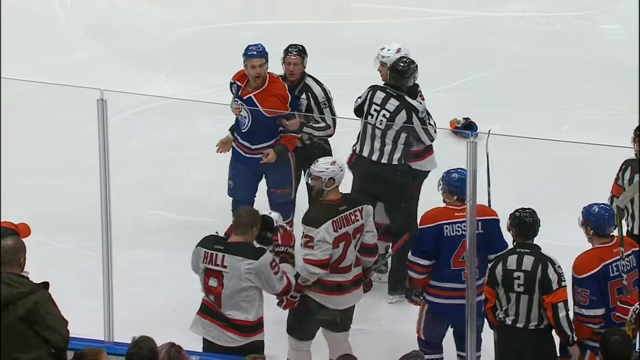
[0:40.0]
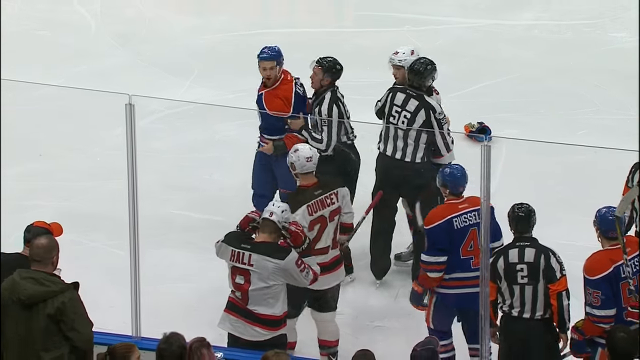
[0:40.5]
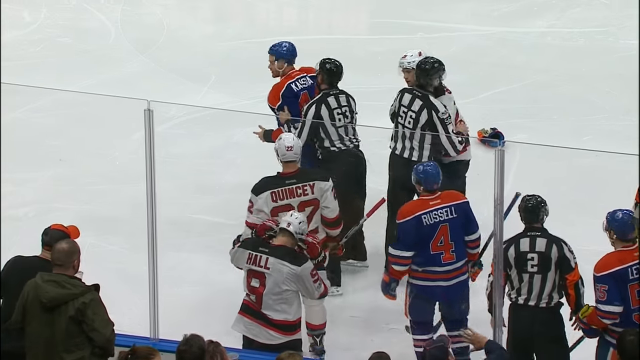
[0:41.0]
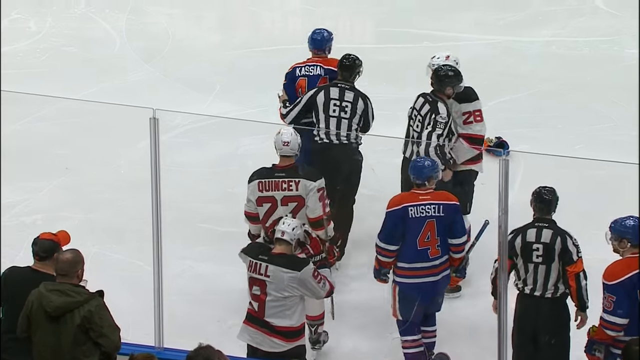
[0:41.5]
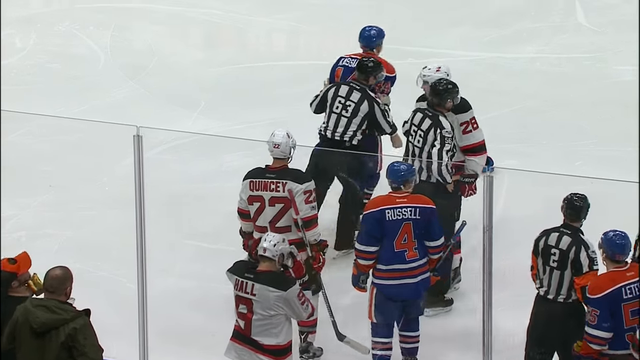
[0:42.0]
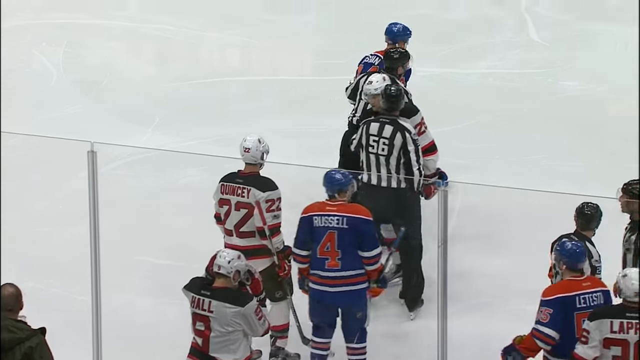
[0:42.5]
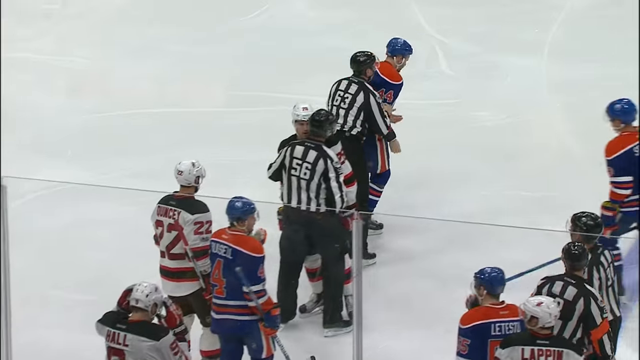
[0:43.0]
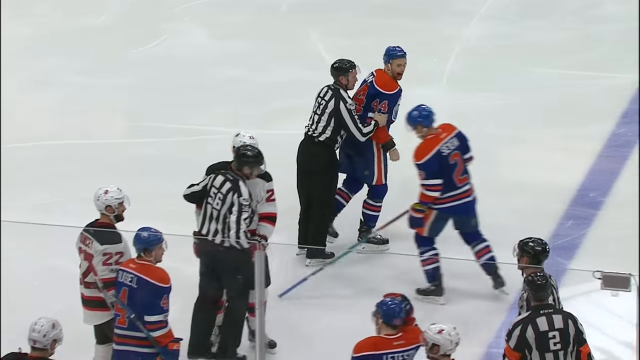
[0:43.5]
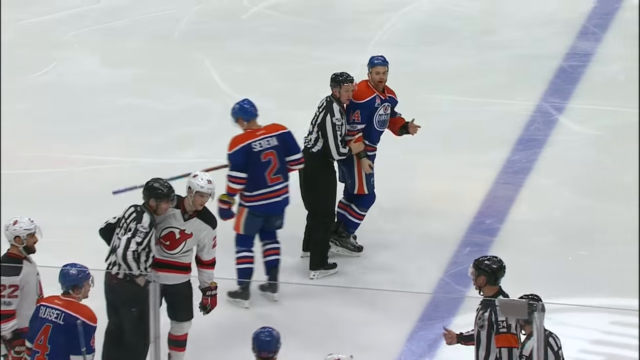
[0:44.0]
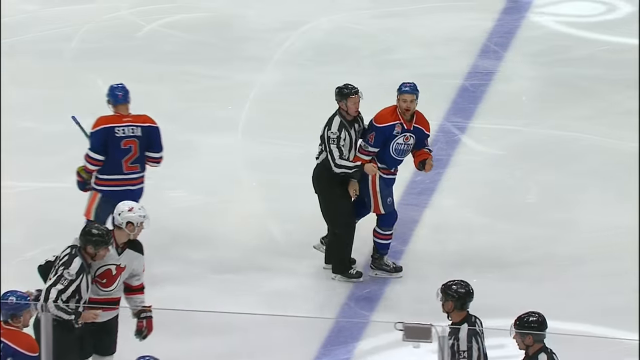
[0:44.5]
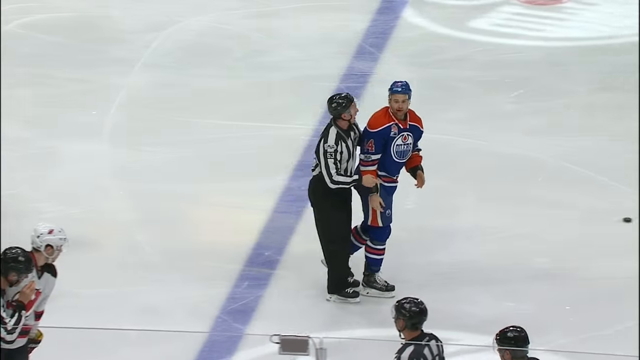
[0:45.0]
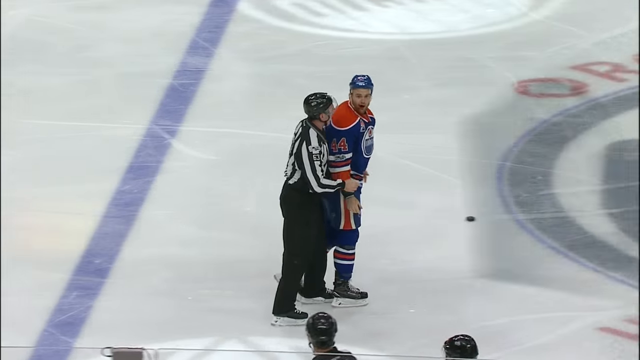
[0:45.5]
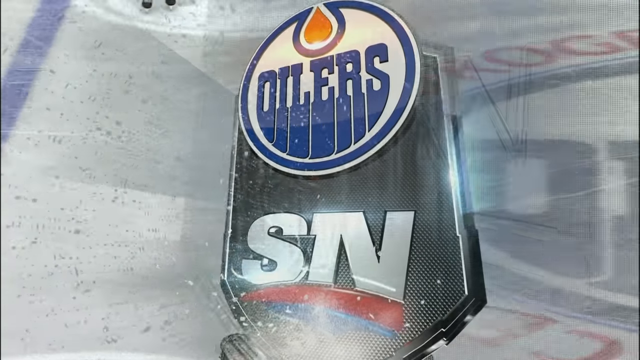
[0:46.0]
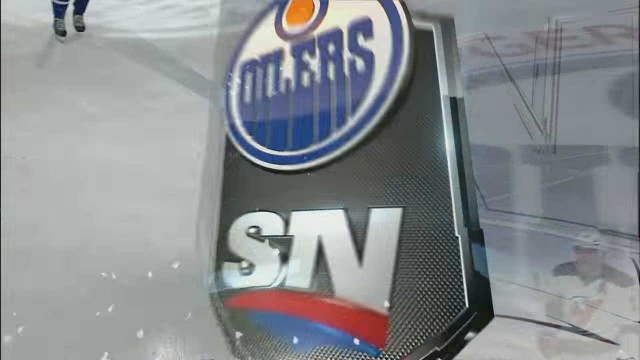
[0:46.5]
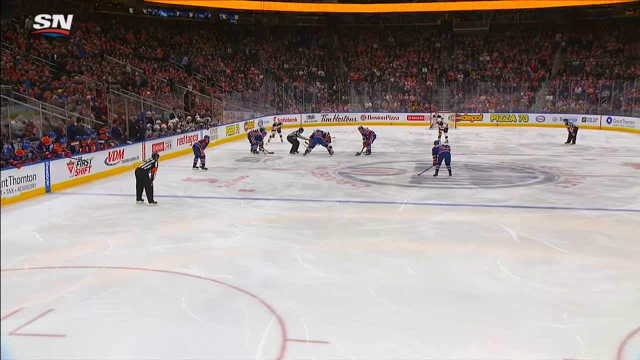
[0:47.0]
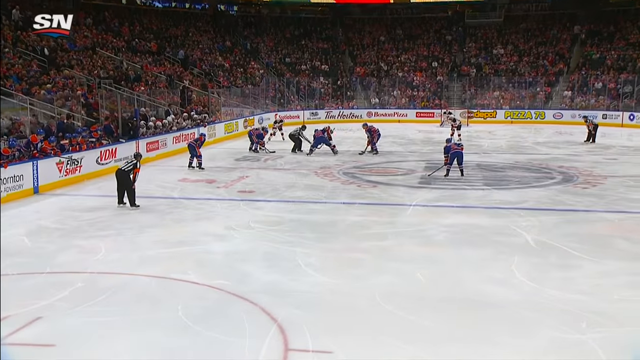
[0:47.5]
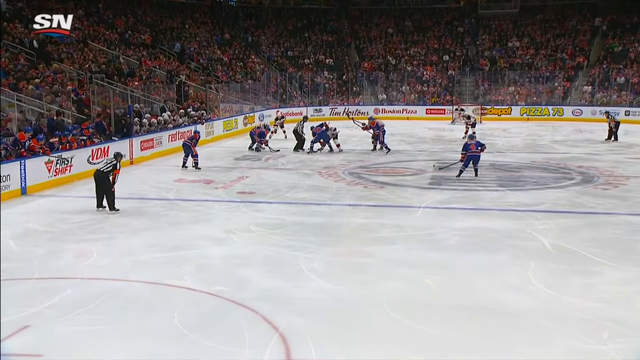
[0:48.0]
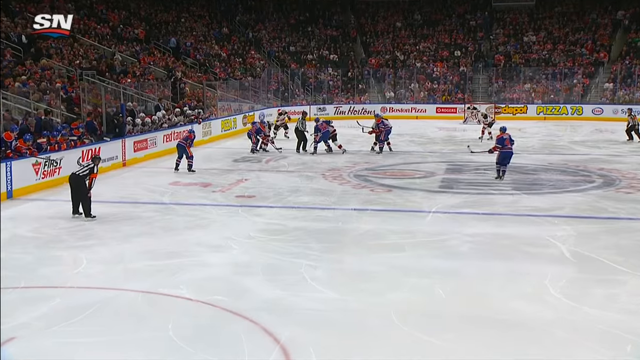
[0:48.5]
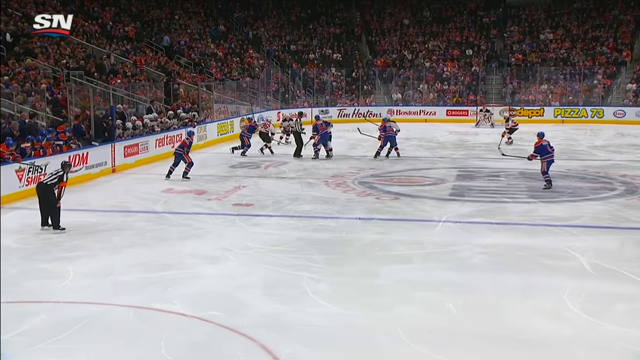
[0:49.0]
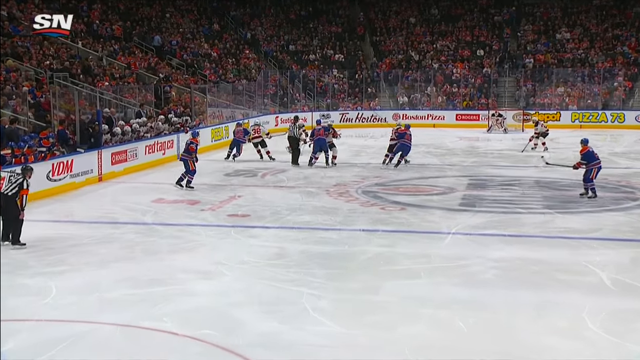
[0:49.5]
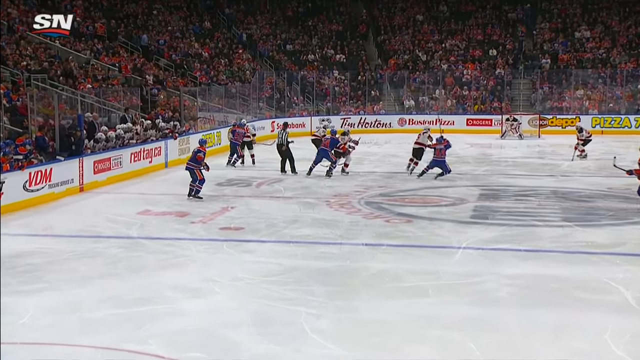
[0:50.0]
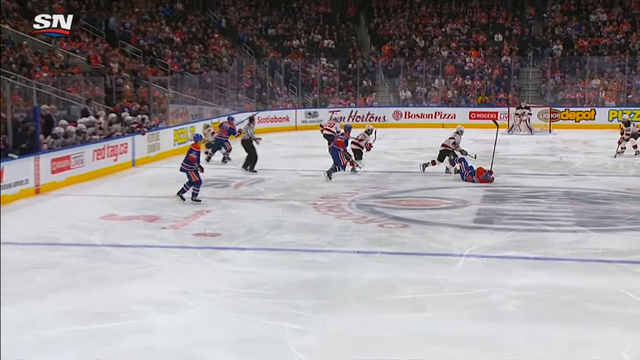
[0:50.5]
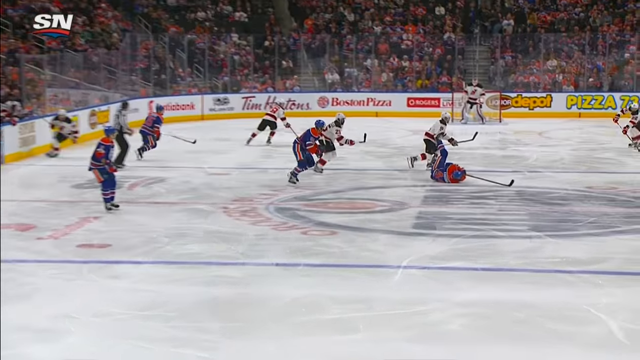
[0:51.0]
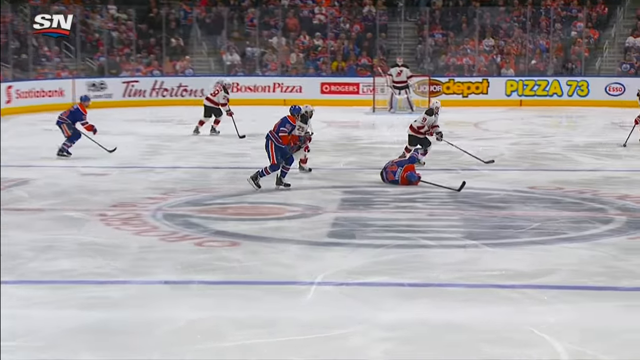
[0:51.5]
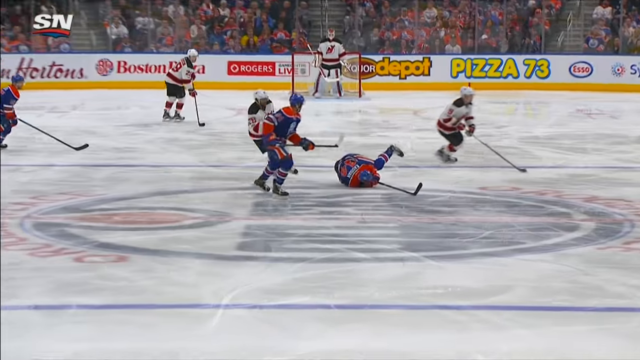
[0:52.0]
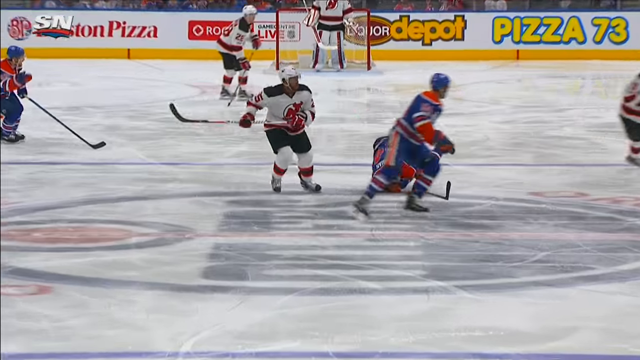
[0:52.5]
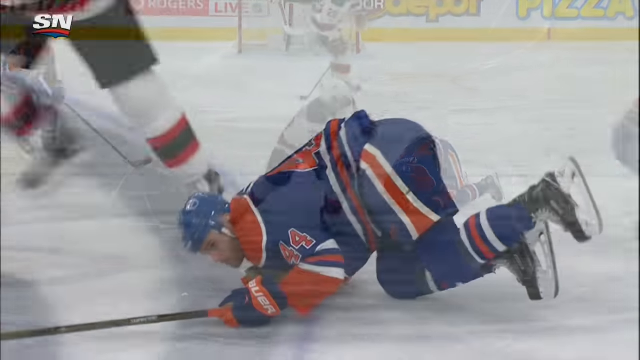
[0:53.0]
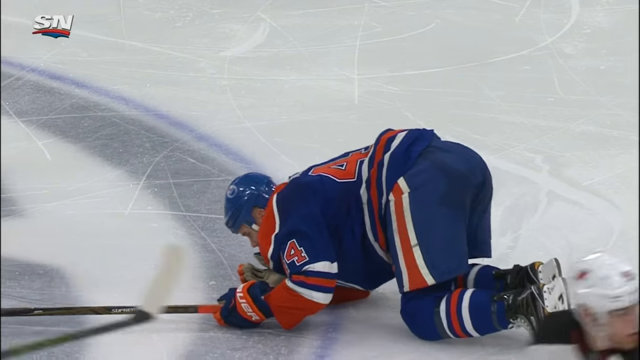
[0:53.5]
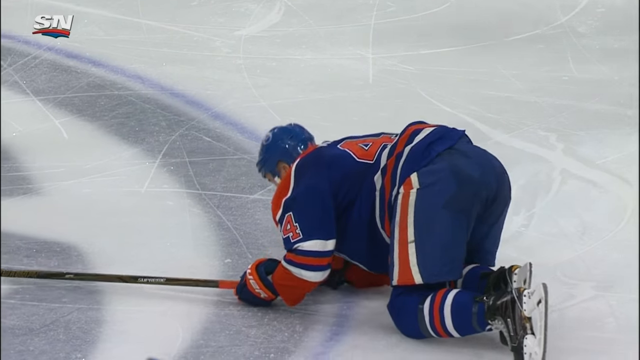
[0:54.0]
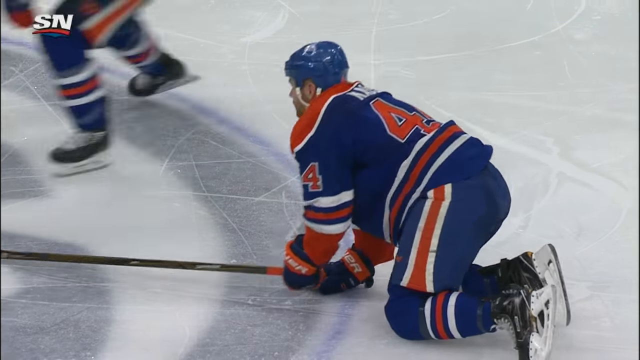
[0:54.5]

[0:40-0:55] Cassian gets knocked down but gets right back up to throw punches. The Oilers wear orange and blue jerseys. A shot shows the Oilers on the bench, where their manager is not really doing anything. Number 44 from the Oilers has a busted mouth leaking blood. The video shows Paul of the Devils, who is possibly the Devils captain. An Oilers player is dropped right on the Oilers logo at center ice.